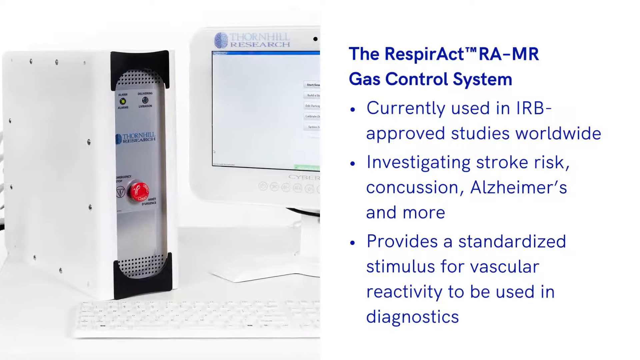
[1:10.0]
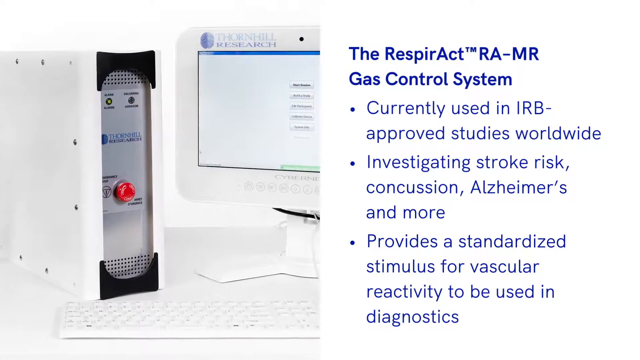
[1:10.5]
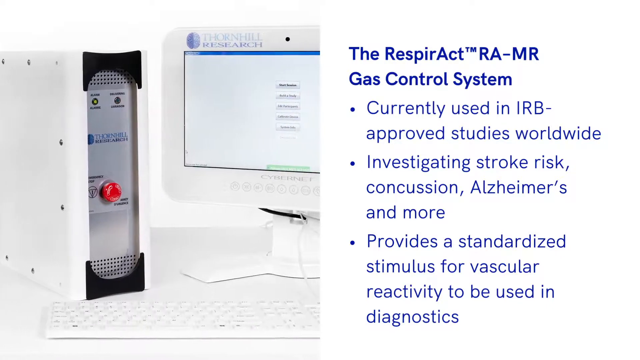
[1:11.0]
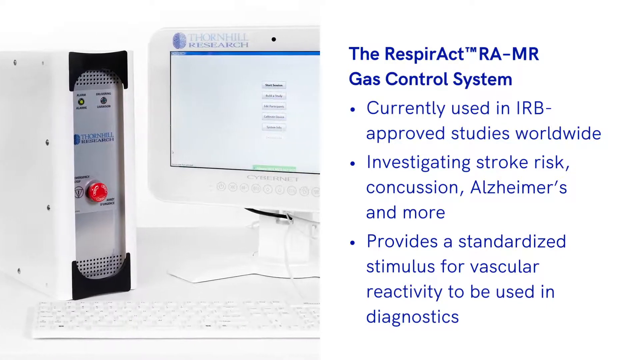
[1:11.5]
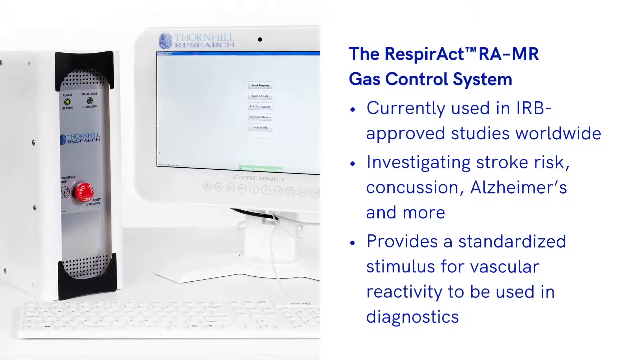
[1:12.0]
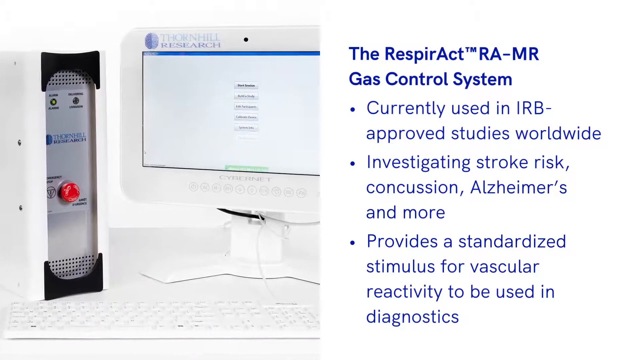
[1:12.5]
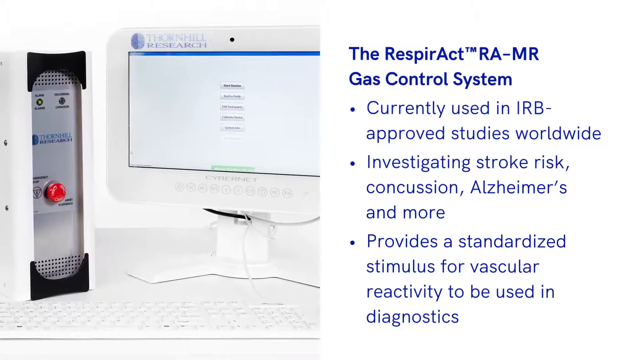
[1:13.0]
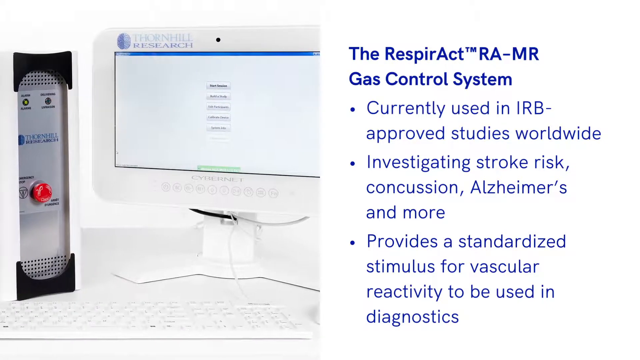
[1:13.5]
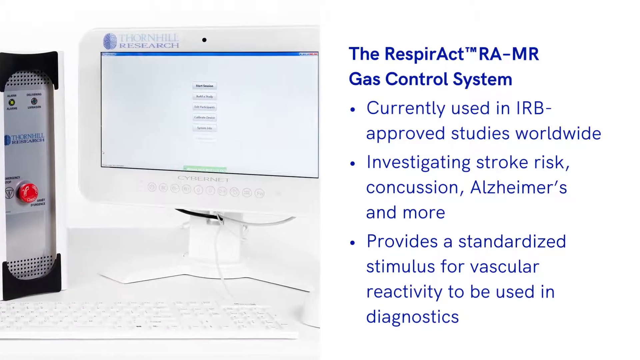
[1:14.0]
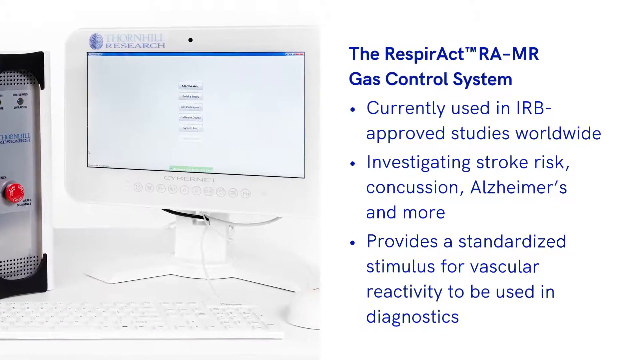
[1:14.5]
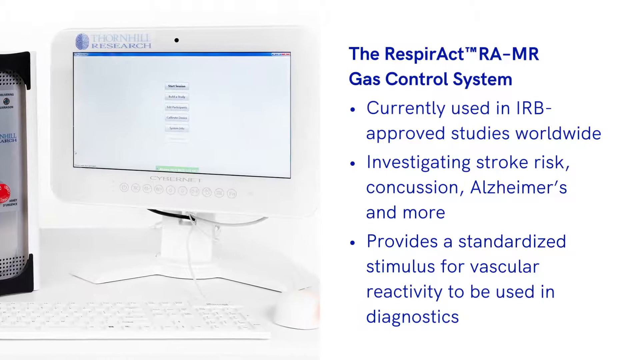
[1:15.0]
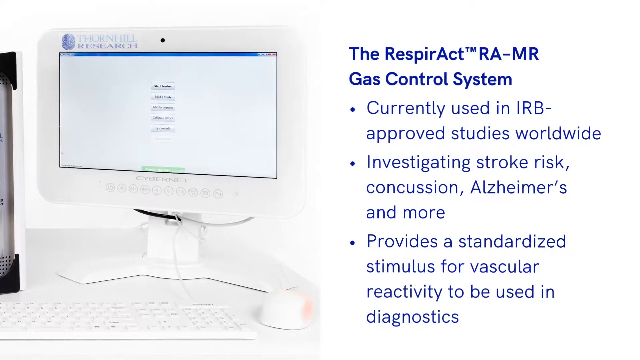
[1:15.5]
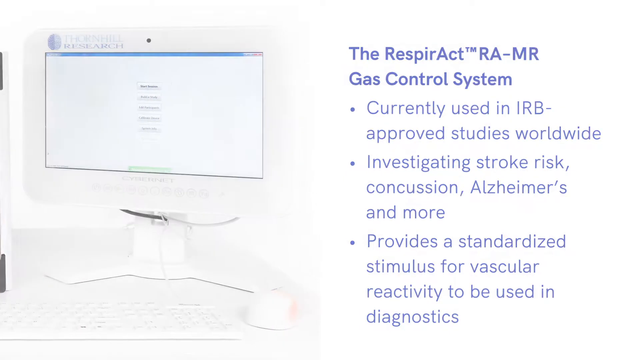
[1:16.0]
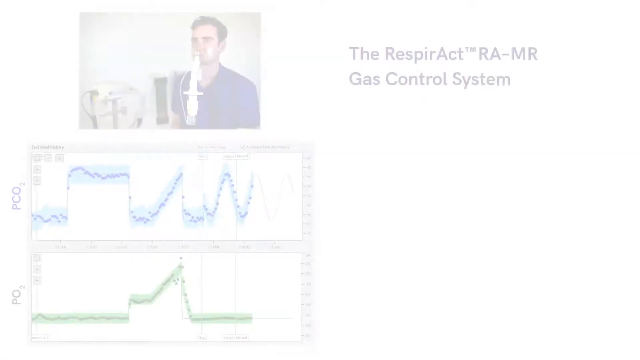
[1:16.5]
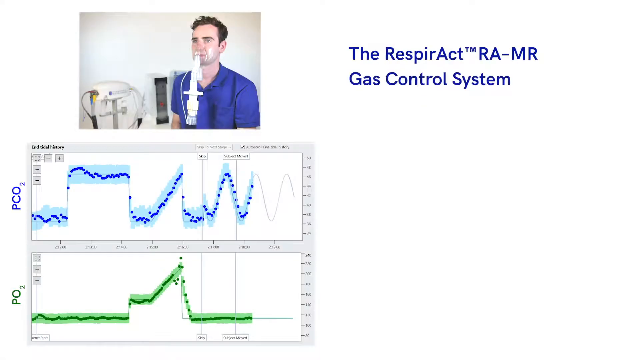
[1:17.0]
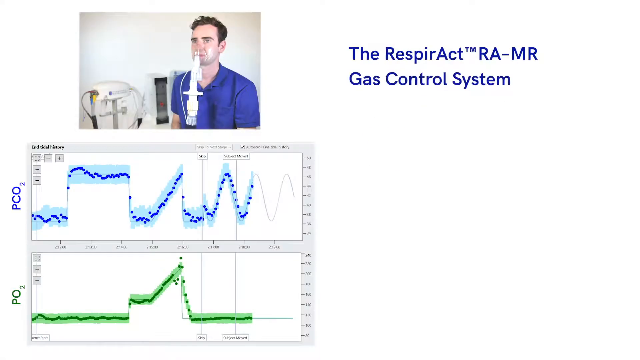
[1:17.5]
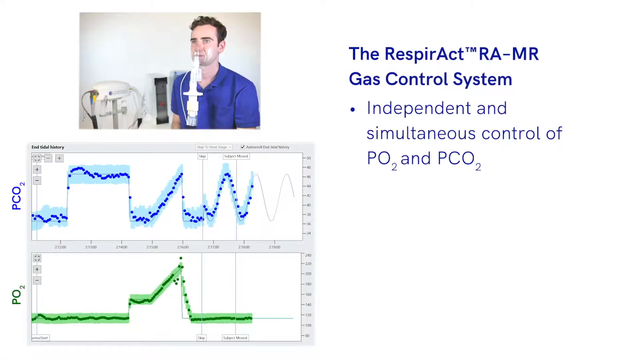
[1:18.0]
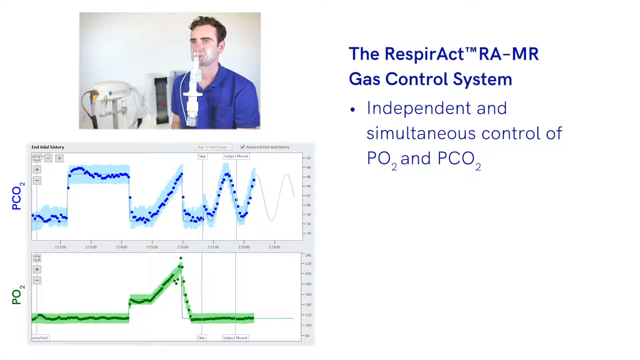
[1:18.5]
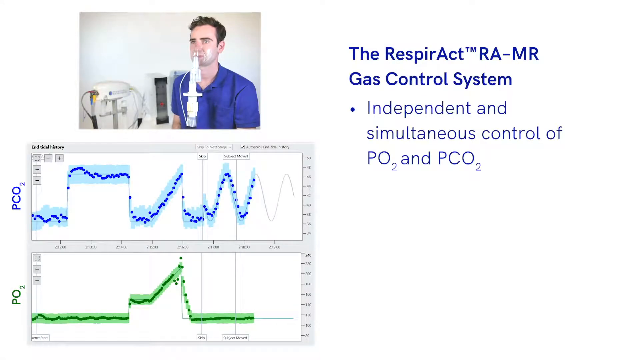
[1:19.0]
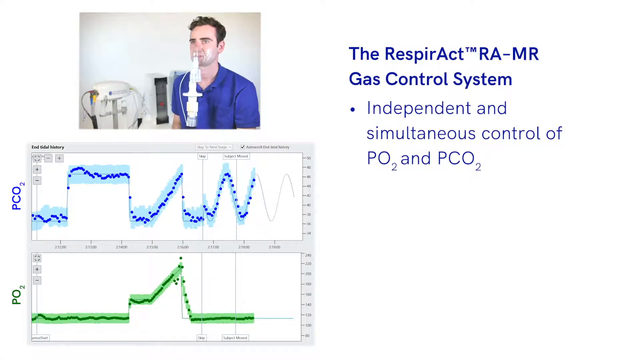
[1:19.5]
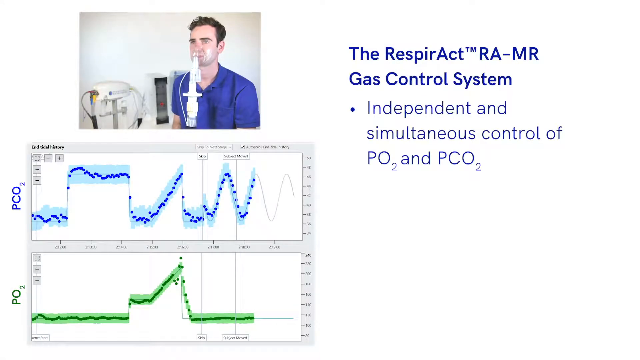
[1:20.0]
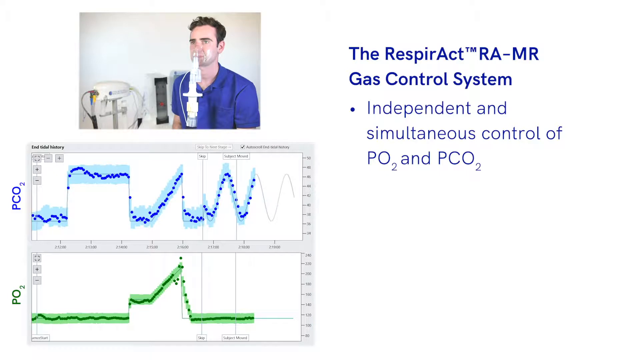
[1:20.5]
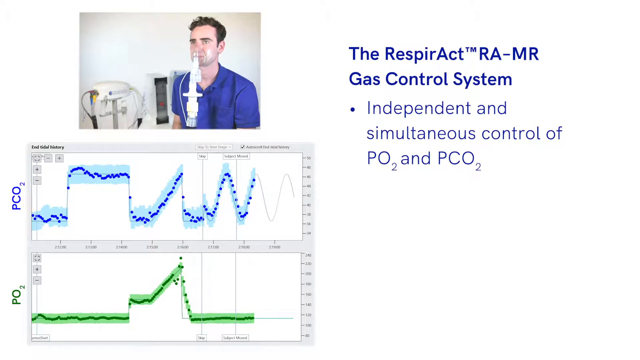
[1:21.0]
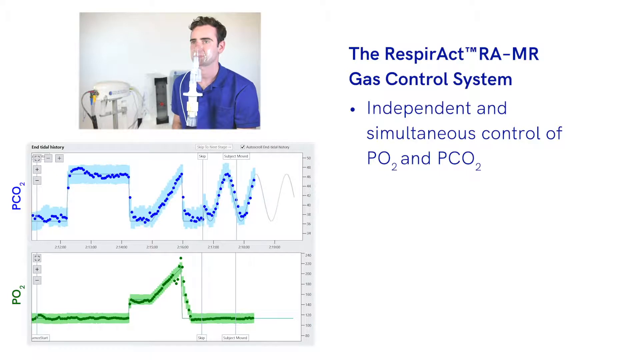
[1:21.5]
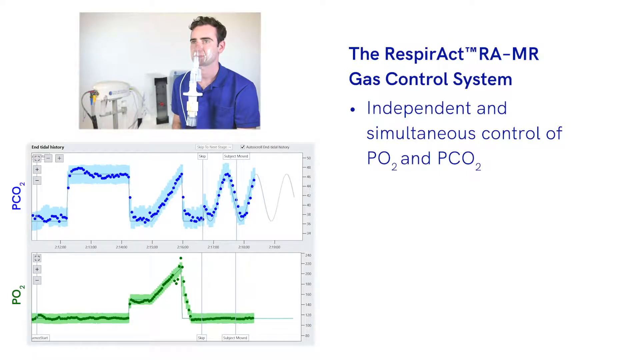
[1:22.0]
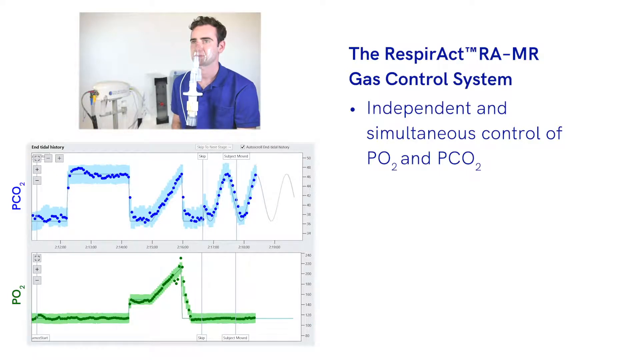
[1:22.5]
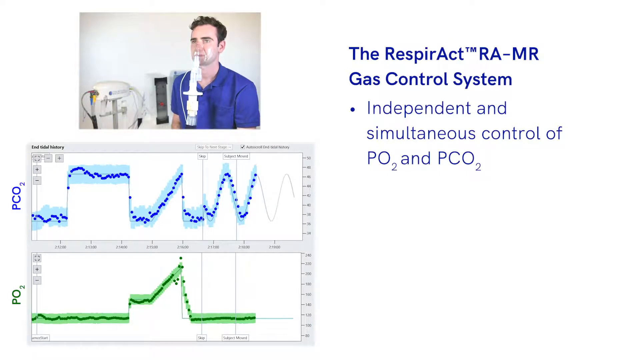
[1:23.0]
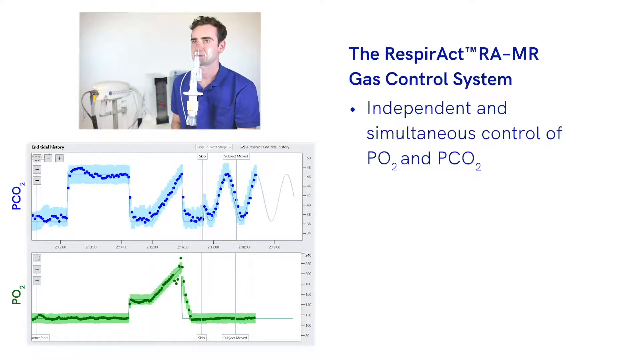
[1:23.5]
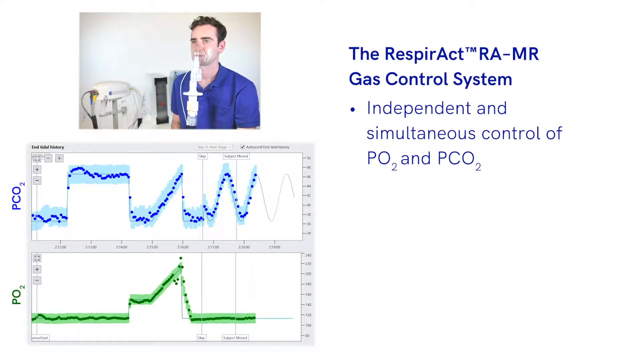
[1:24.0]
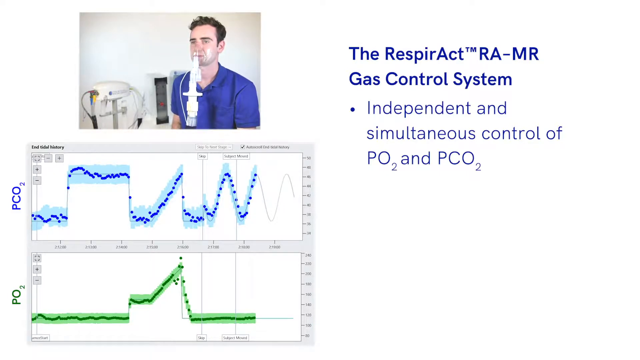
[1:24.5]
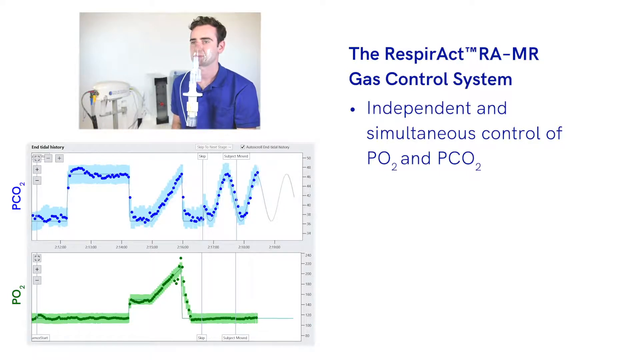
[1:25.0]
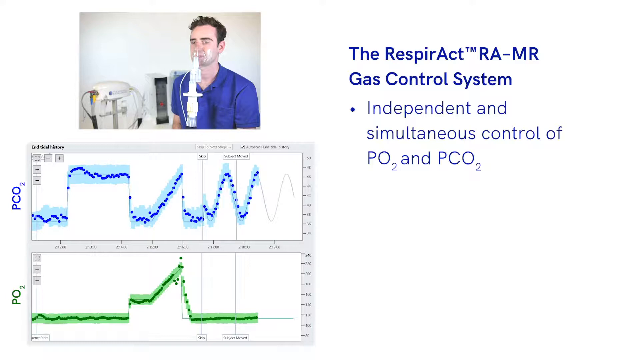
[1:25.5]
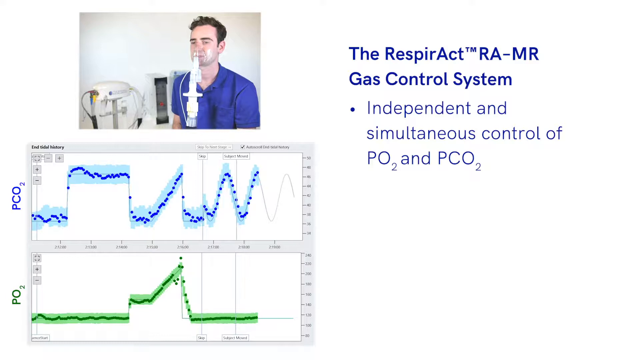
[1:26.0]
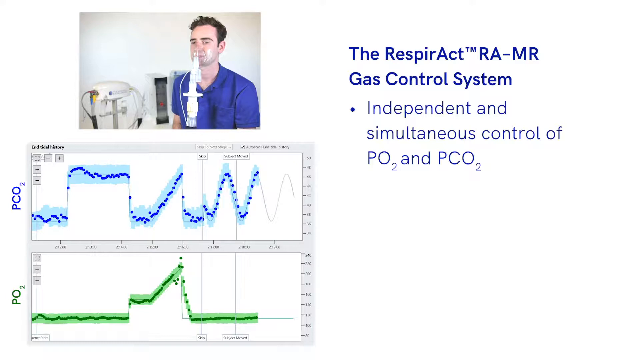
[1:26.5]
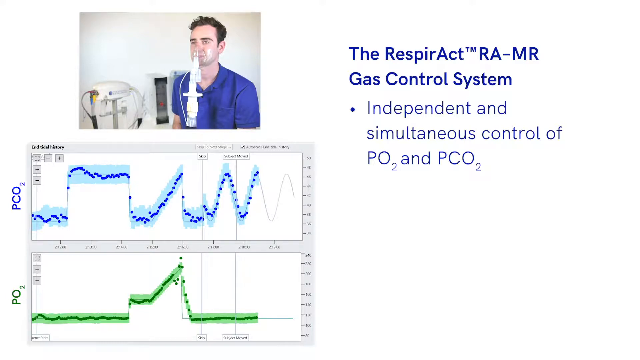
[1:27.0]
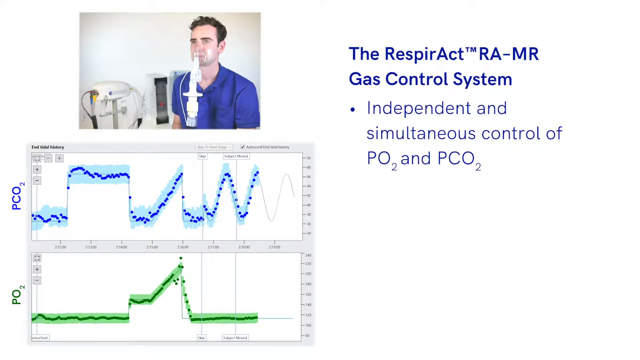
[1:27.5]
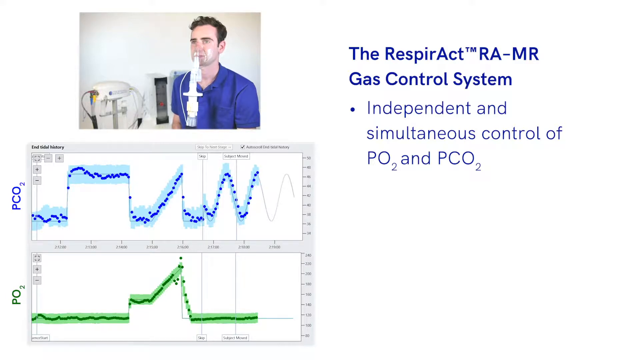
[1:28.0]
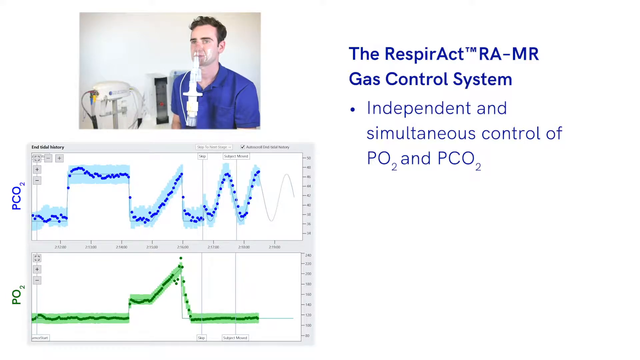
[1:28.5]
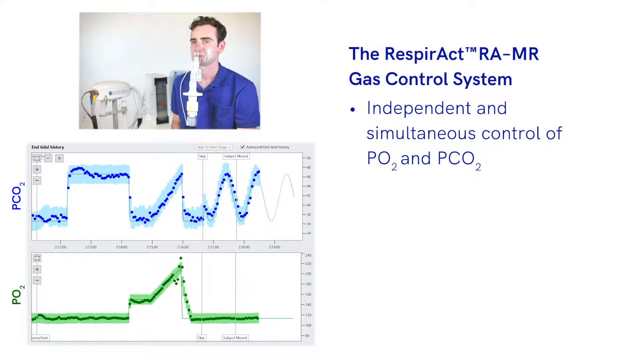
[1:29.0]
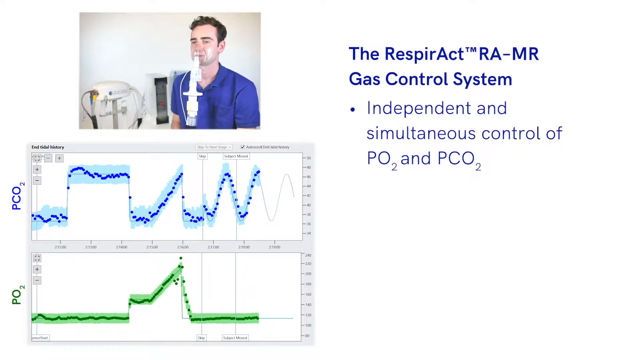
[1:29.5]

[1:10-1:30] Text about the Thornhill Research Respiract RA-MR gas control system continues, stating it is used in IRB-approved studies worldwide, investigating stroke risk, concussion, Alzheimer's, and more, and provides a standardized stimulus for vascular reactivity to be used in diagnostics. Next, text reads "Respiract RA-MR gas control system" with "independent and simultaneous control of PO2 and PCO2."